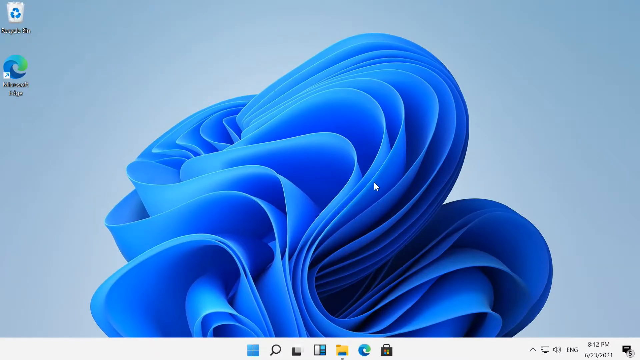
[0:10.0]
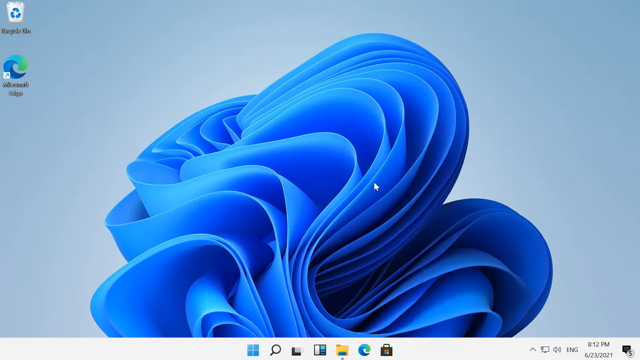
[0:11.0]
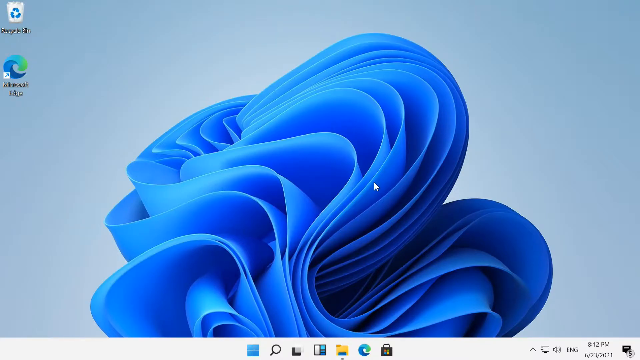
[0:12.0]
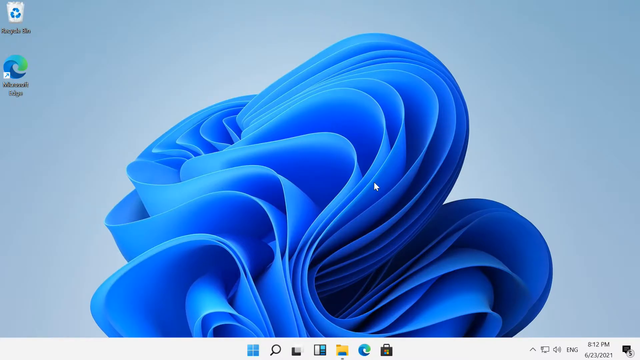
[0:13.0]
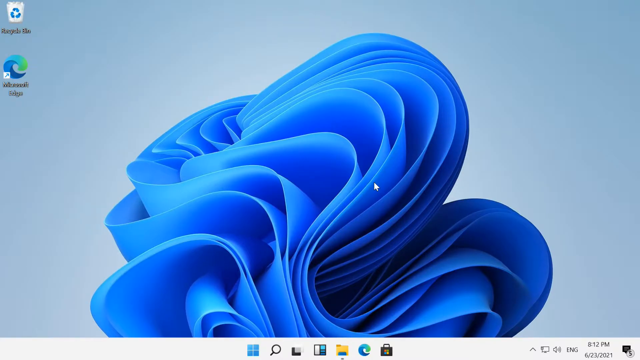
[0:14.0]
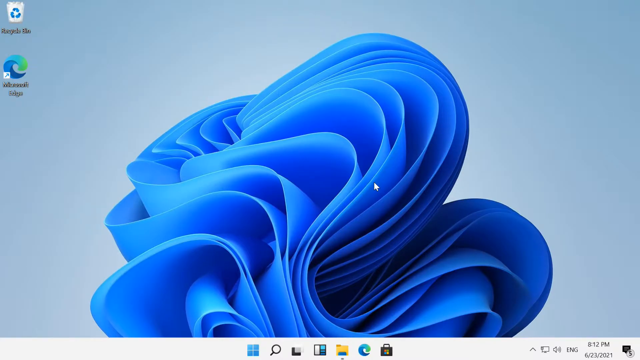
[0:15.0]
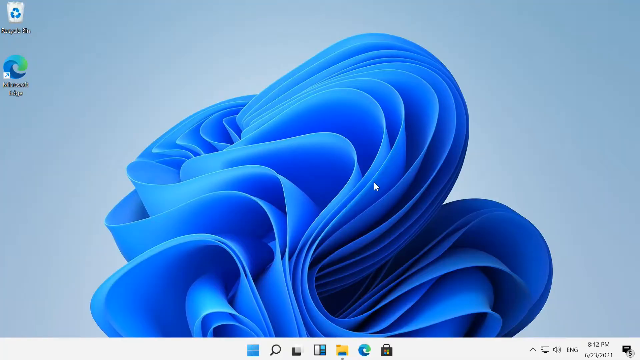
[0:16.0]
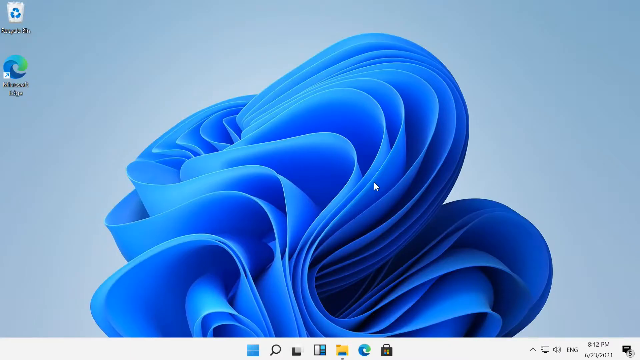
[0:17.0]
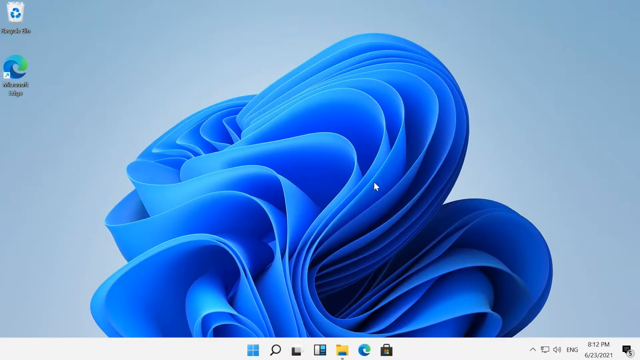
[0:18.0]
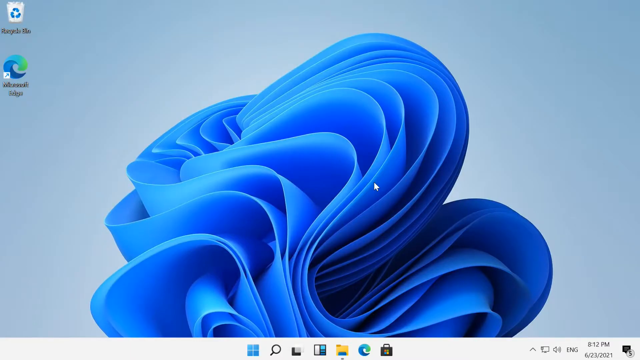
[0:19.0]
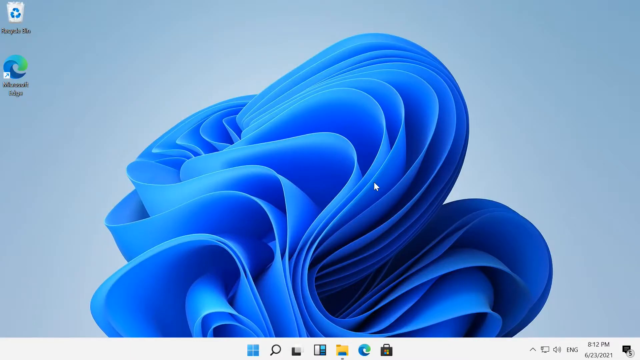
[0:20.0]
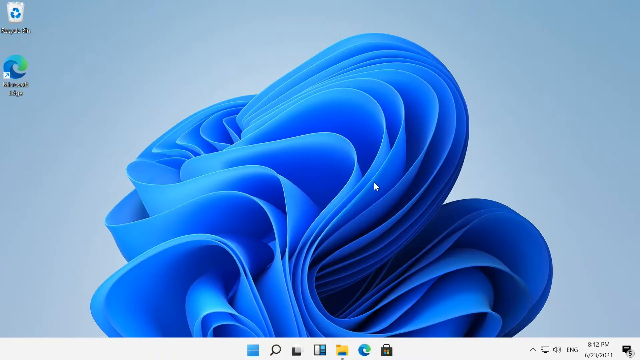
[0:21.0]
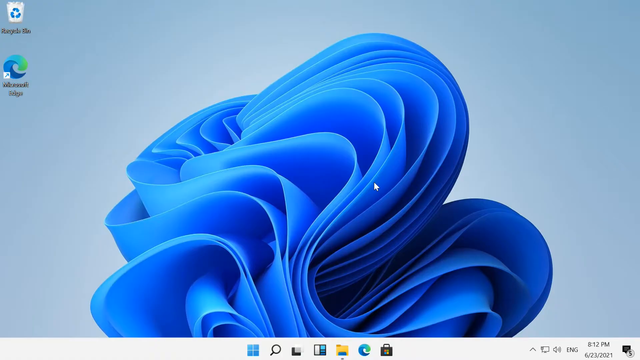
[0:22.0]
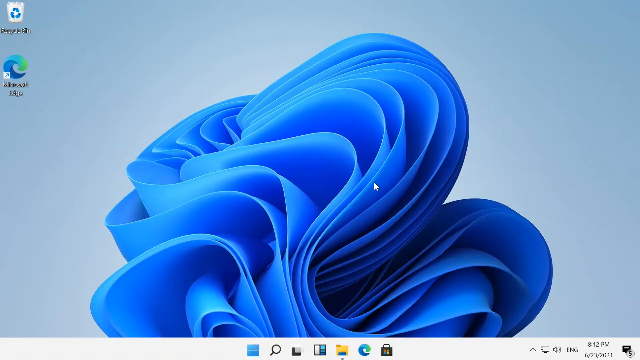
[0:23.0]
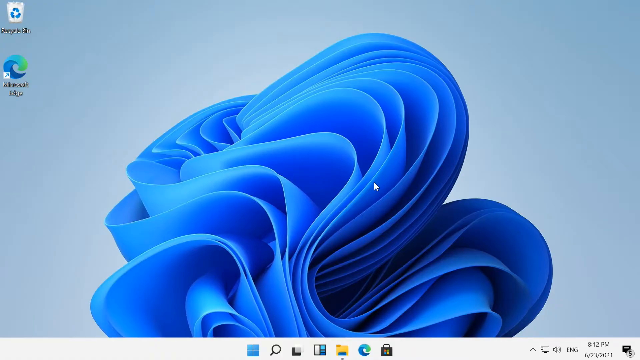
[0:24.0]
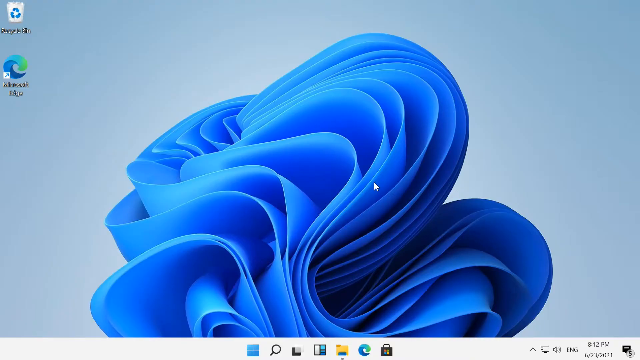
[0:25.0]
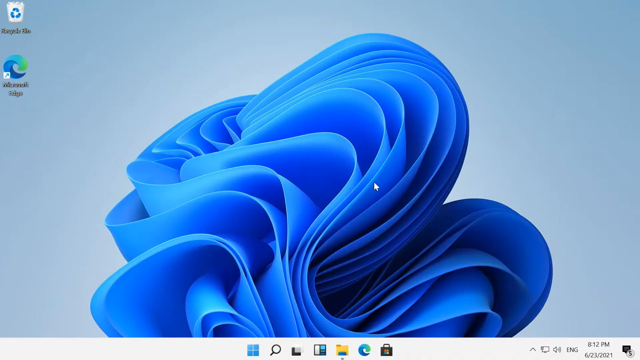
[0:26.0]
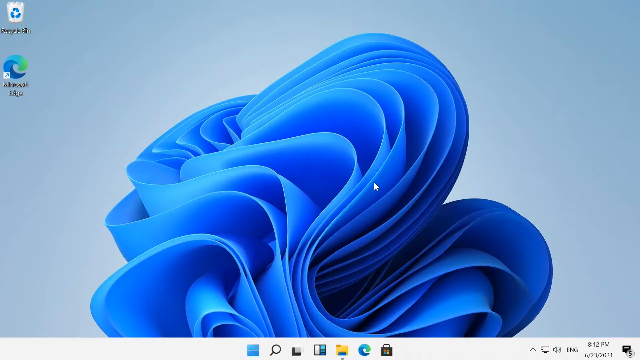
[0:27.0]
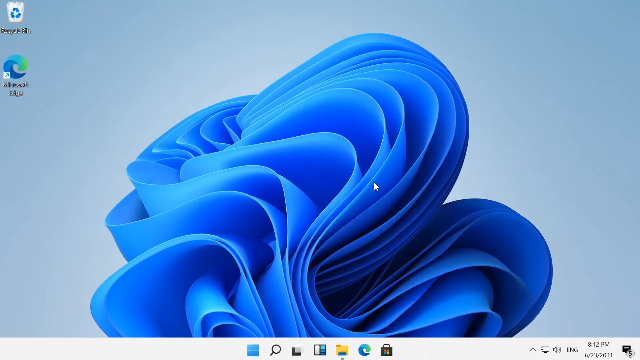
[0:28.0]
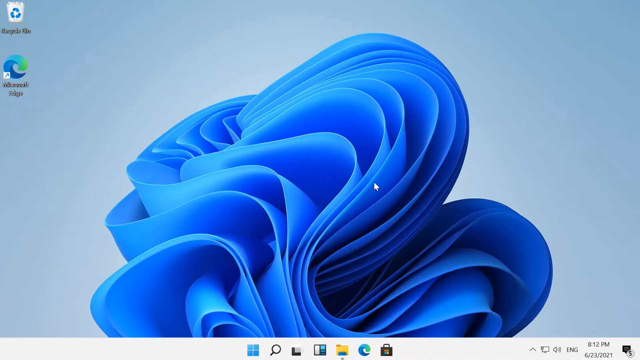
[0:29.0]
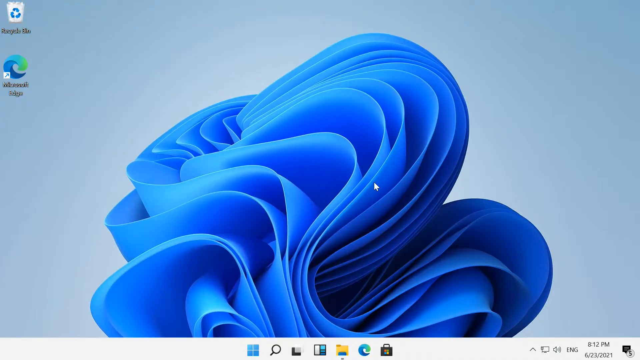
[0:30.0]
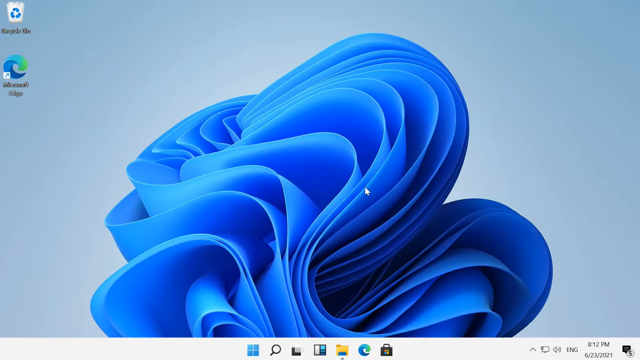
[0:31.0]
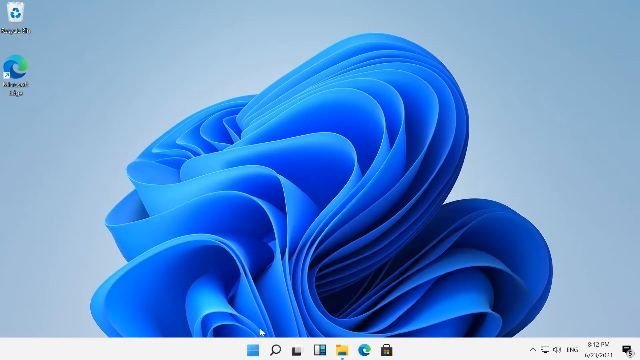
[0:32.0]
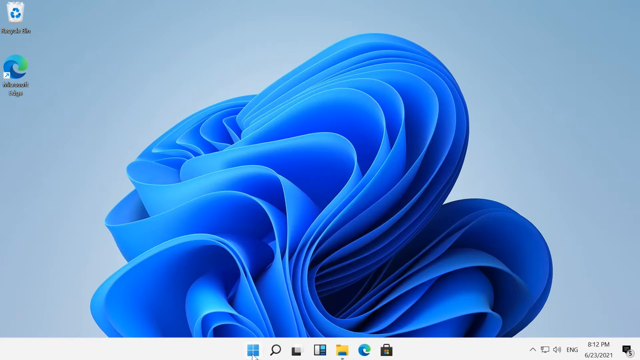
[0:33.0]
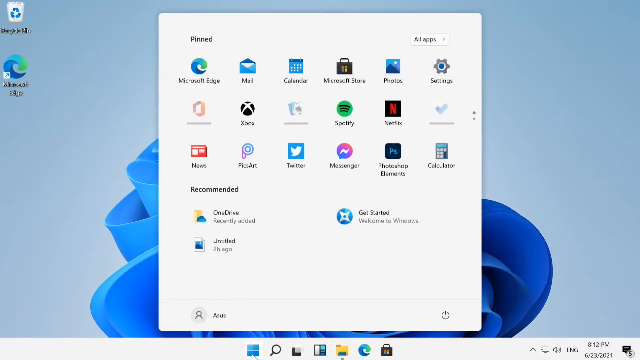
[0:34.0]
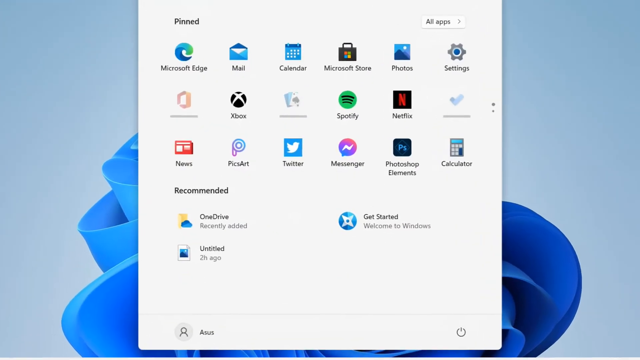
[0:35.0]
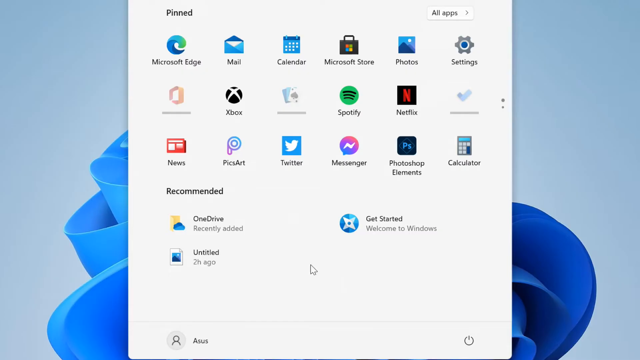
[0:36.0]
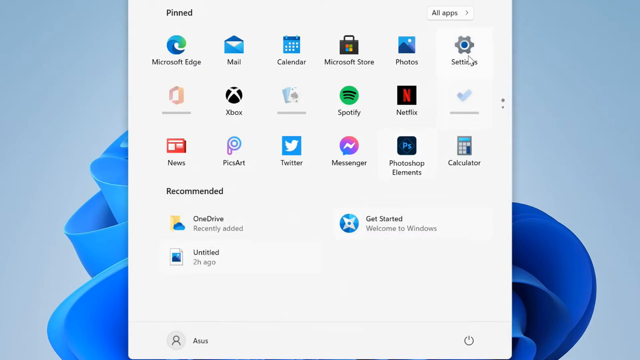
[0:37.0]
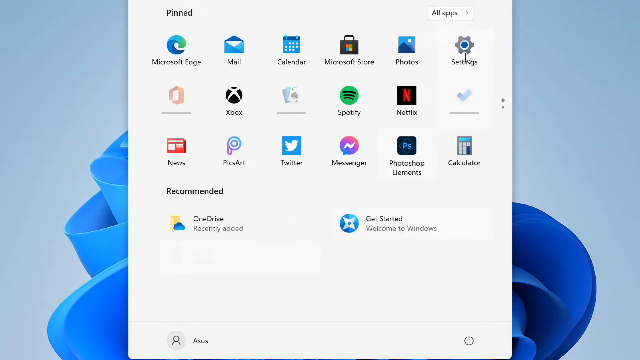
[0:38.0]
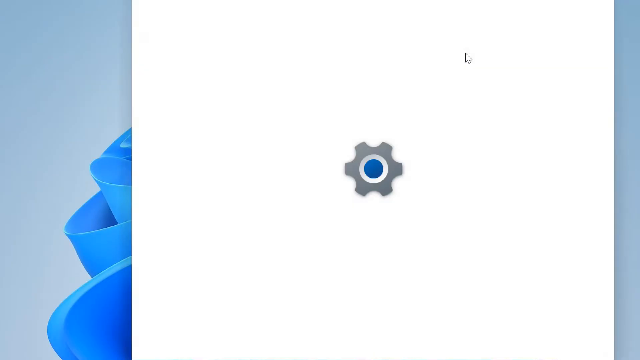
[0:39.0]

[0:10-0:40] The desktop background is light blue, and the picture on it is darker blue and appears to be ribbons folded up into a shape that looks like the top of a rose. In the top left of the screen is a white trash can with a blue recycle logo, with black letters underneath reading "recycle bin," and under the recycle bin icon is a Microsoft Edge icon. The desktop is visible for approximately 24 seconds before the video transitions. A window pops up with pinned app icons such as Microsoft Edge, Mail, Calendar, Microsoft Store, Photos and Settings. The next row of pinned app icons includes Xbox, Spotify and Netflix, and the third row includes News, PicsArt, Twitter, Messenger, Photoshop Elements and Calculator. Recommended apps to pin include OneDrive, Get Started and Untitled. The video zooms in on the pinned apps, and the white cursor selects Settings. Settings opens to black letters reading "Asus," with "Local Accounts" underneath and "Sign in" in blue letters underneath that.